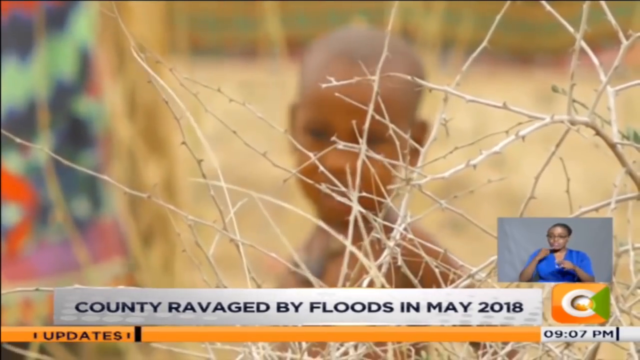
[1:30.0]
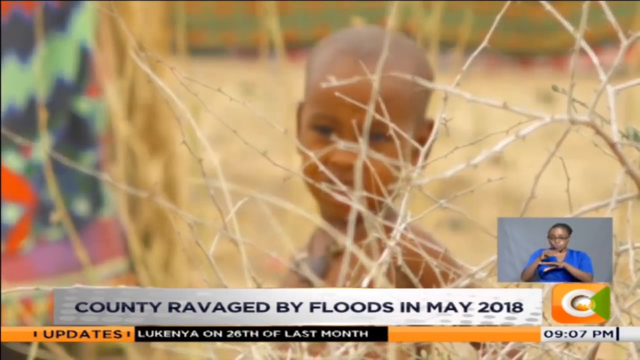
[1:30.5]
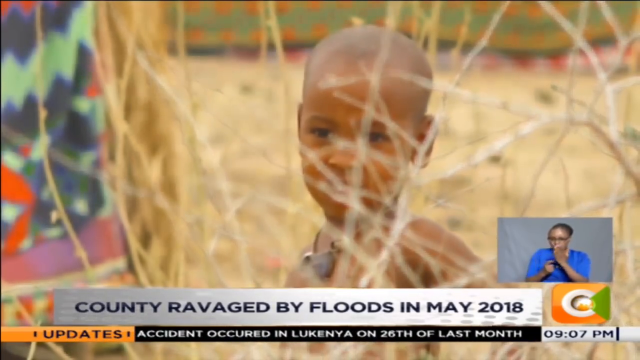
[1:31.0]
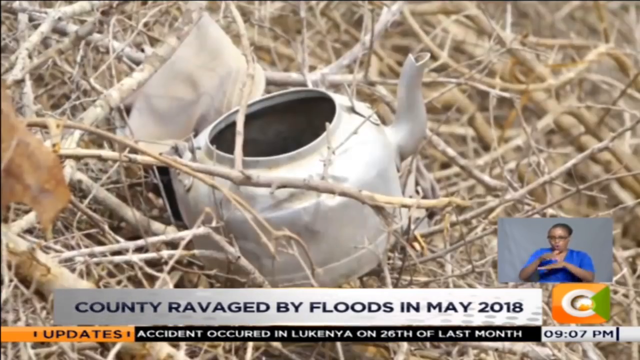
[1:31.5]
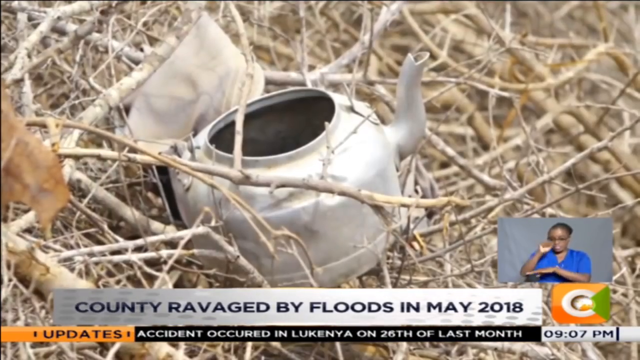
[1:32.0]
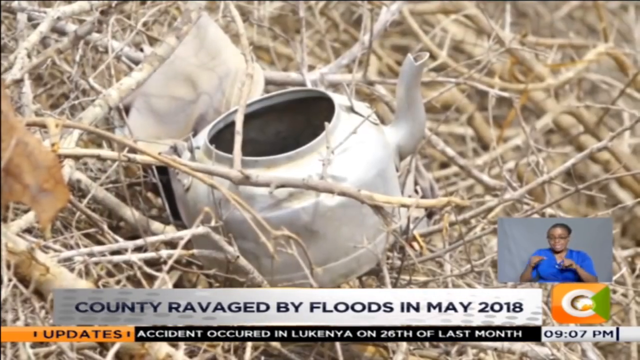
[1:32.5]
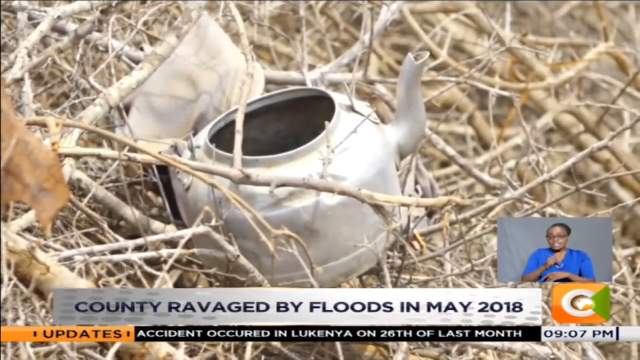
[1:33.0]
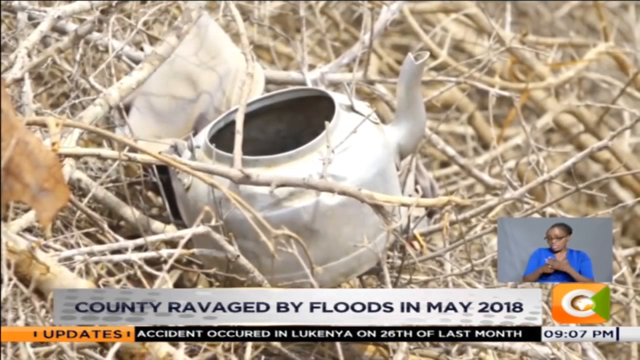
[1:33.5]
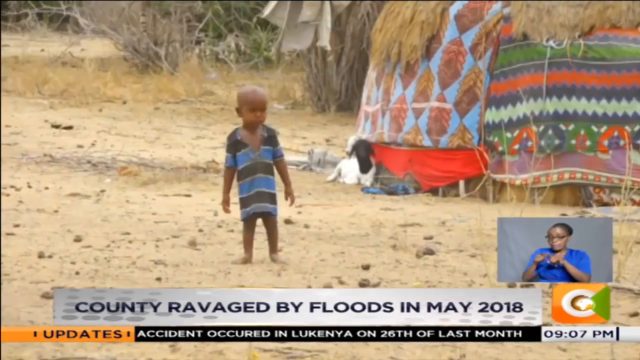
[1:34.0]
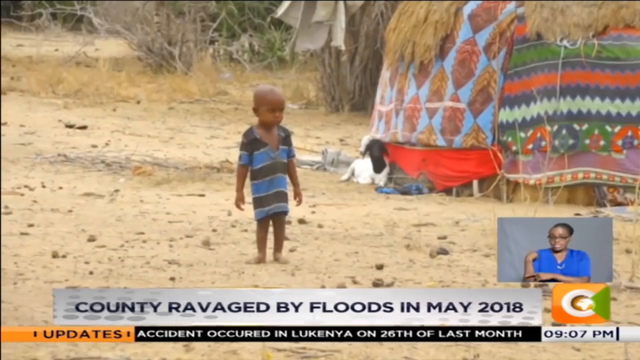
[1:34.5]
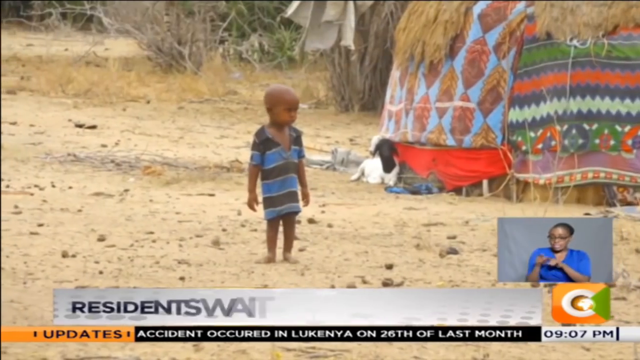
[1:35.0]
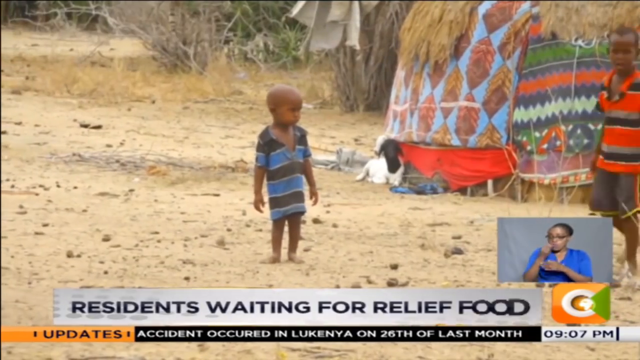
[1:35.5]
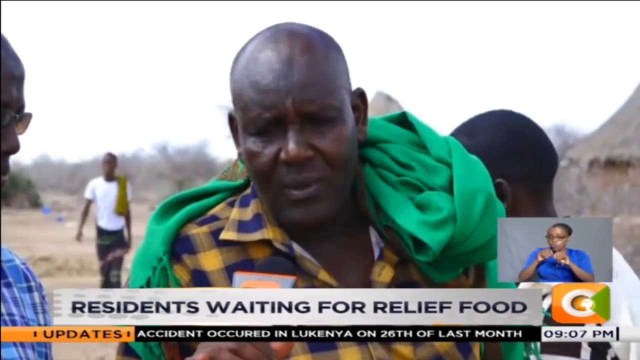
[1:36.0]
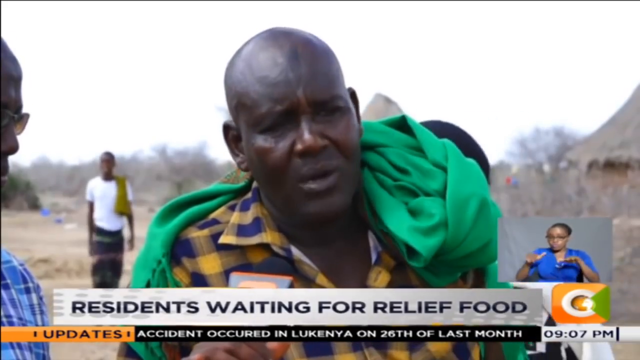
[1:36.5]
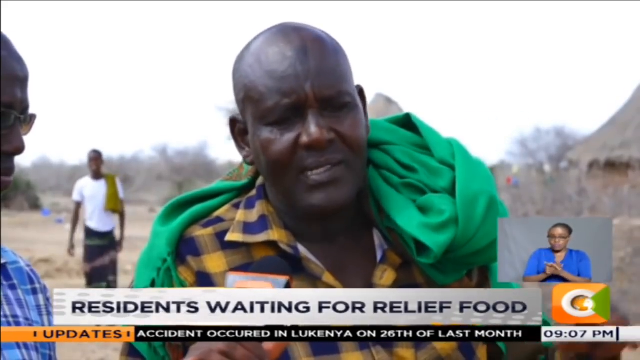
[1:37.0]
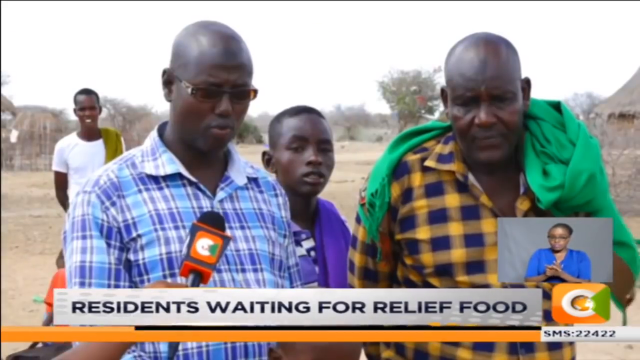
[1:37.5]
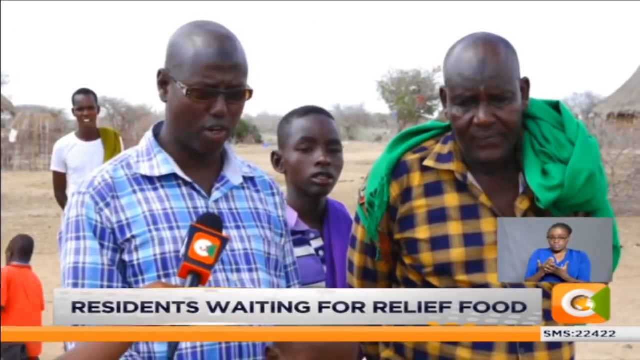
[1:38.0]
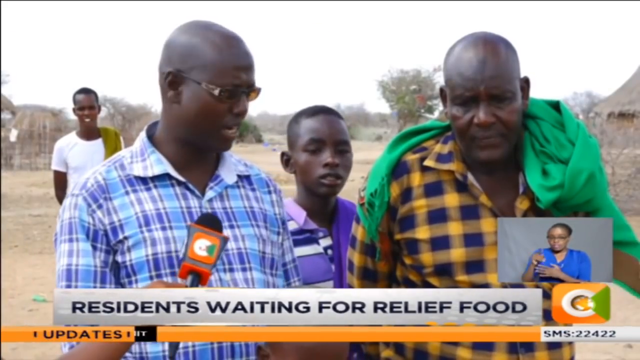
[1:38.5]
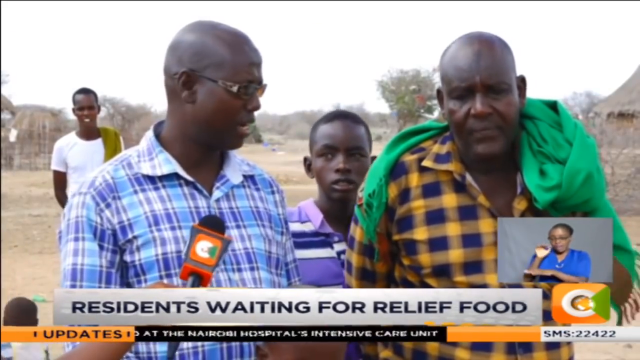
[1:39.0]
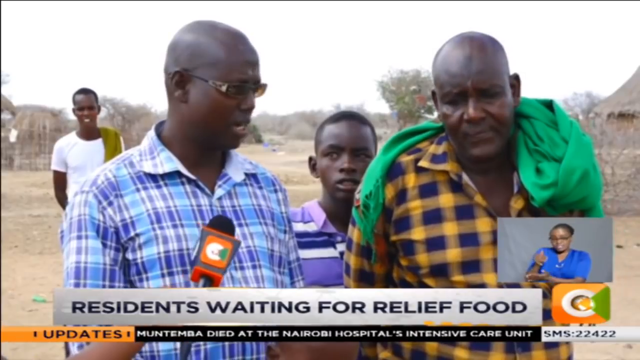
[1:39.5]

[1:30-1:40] The baby behind the bush appears to be hiding. A teapot with nothing in it is on the ground. B-roll shows kids walking around, and then the interview continues with the same man in the blue plaid shirt alongside an older person in a yellow plaid style shirt. The man is interviewed, possibly discussing the effects, while someone else with him also gives an explanation. The sign language interpreter is still visible down below, and at the very end a title at the bottom reads "residents waiting for relief food".